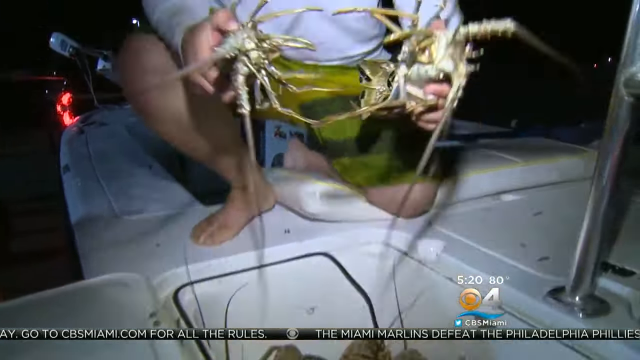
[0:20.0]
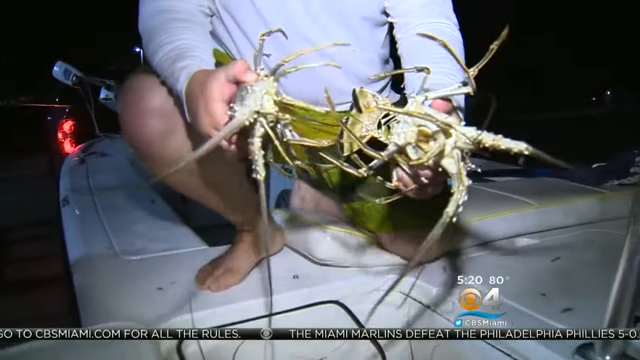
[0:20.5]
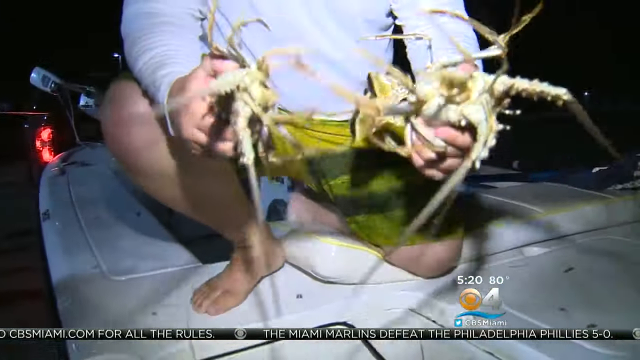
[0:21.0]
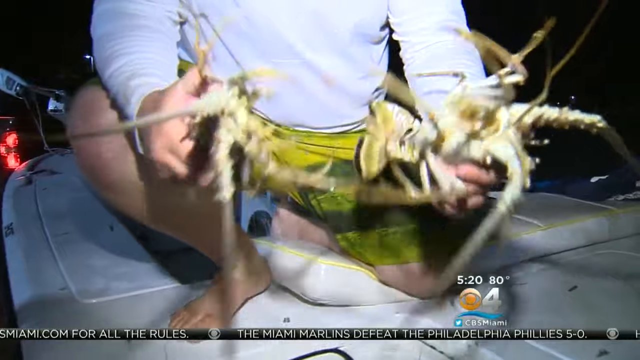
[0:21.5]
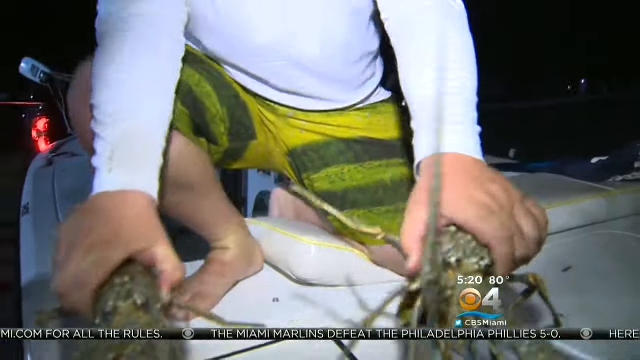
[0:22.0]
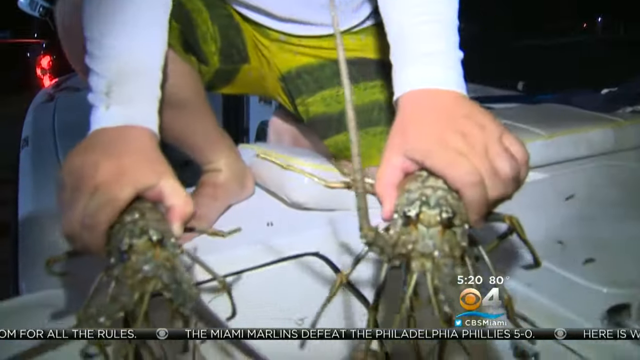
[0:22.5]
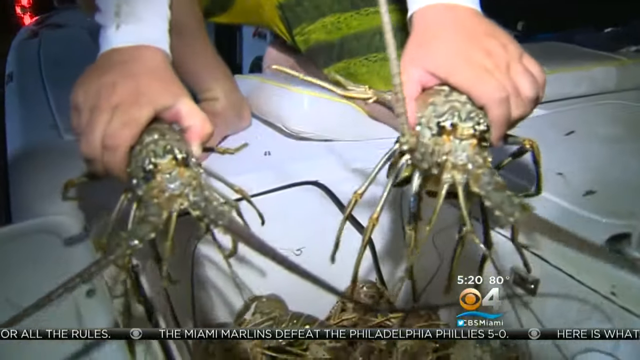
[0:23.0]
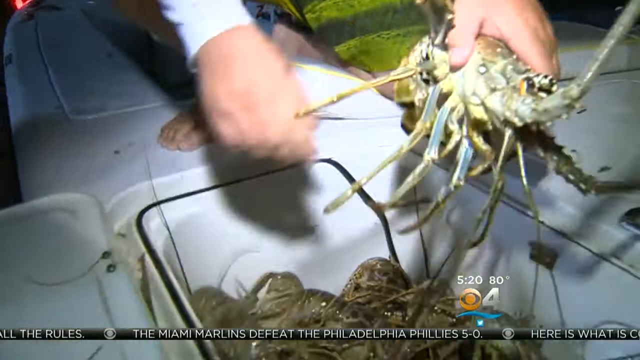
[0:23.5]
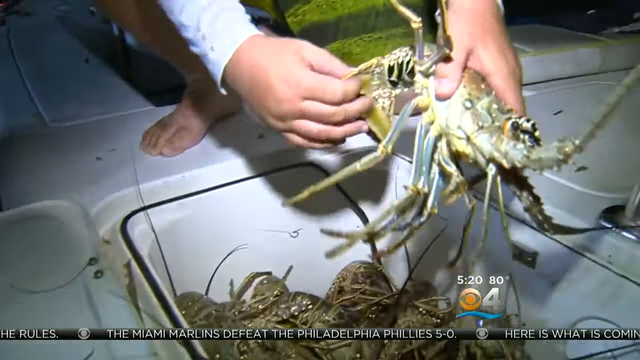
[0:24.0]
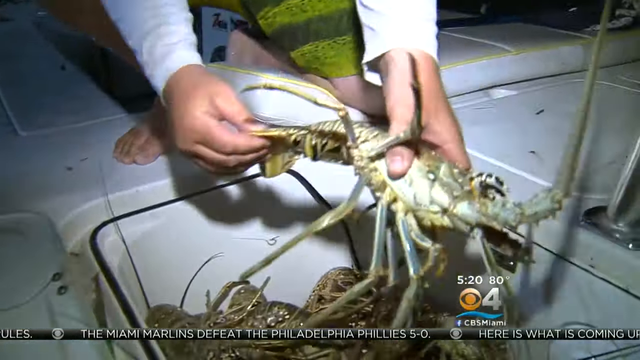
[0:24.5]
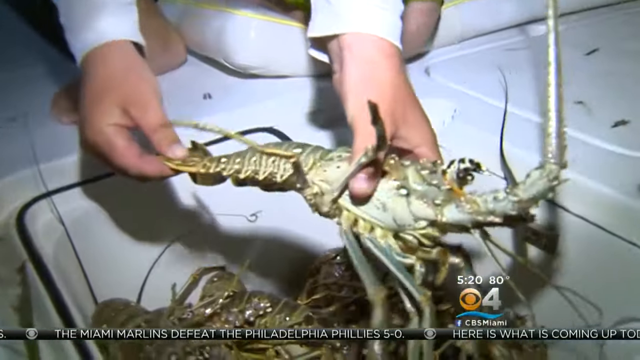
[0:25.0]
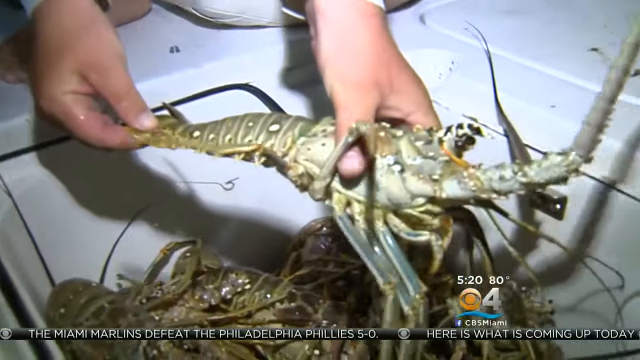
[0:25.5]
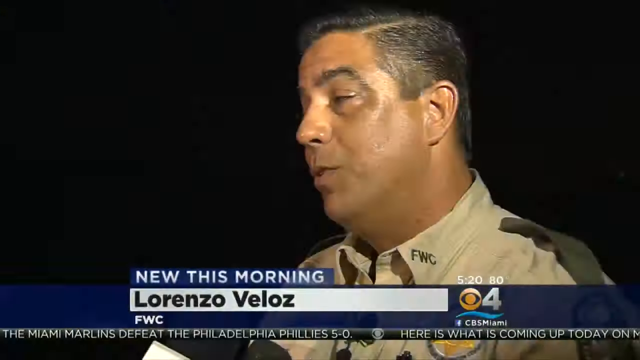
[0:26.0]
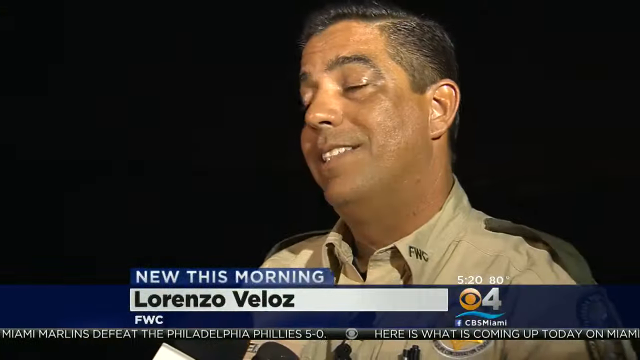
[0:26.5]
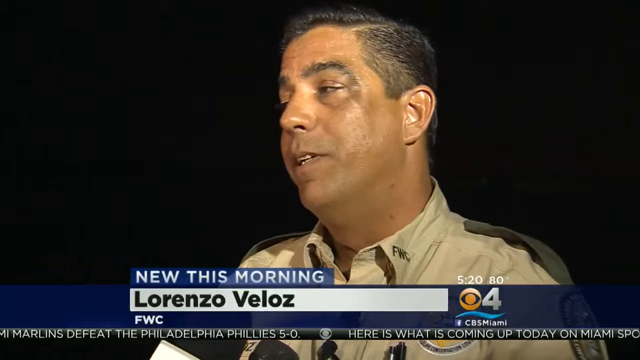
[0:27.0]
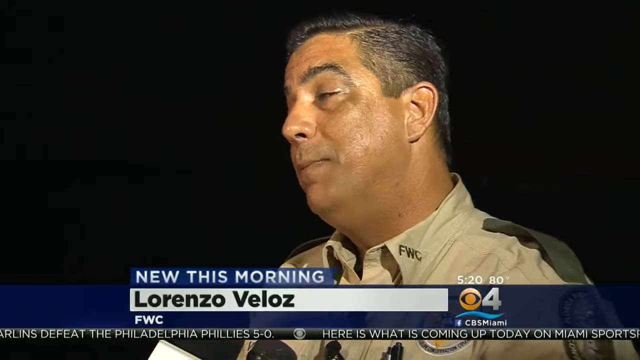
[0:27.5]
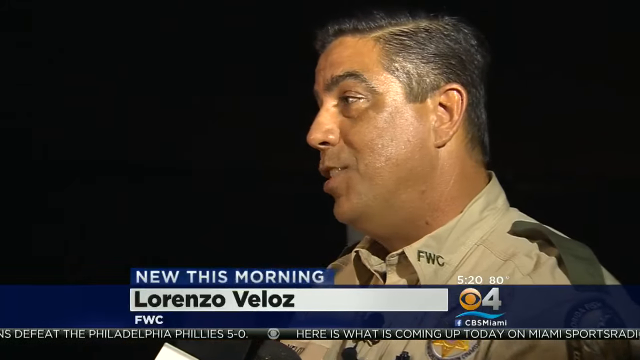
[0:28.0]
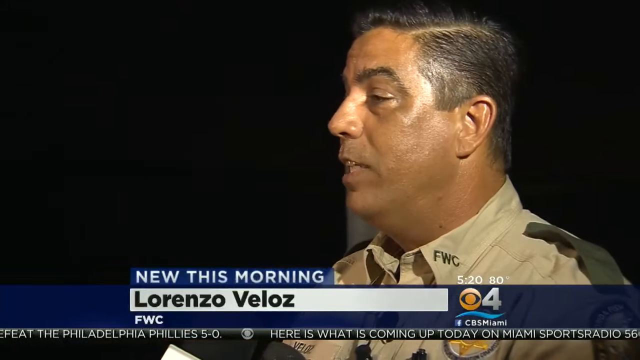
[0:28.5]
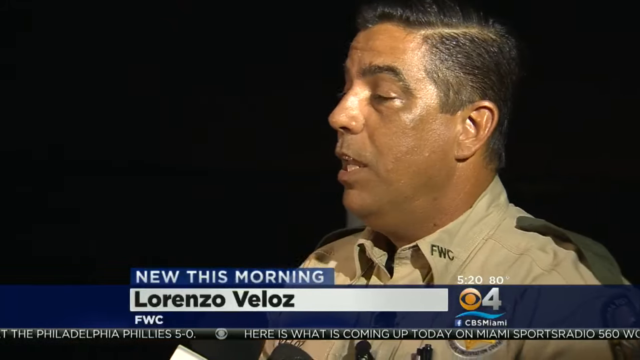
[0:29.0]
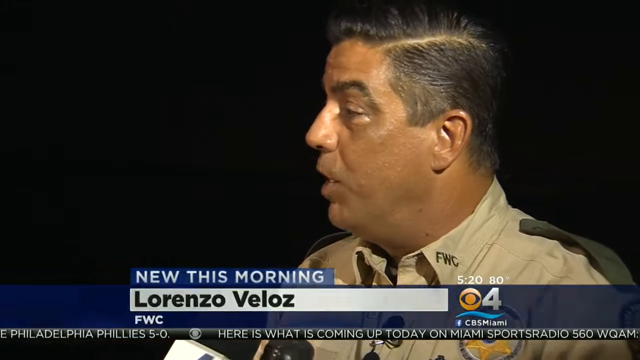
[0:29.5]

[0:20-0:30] A man touches the lobsters and looks at them closely; the lobster has many legs, and he handles its head or tail. He takes the lobsters out and examines them. A man who looks like a police officer is talking, and people appear happy catching the lobsters. The man handling them wears green shorts with stripes and a white long-sleeved t-shirt; he sits on top of his boat and smiles.